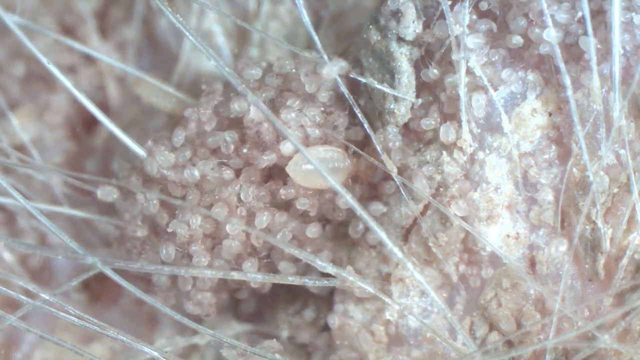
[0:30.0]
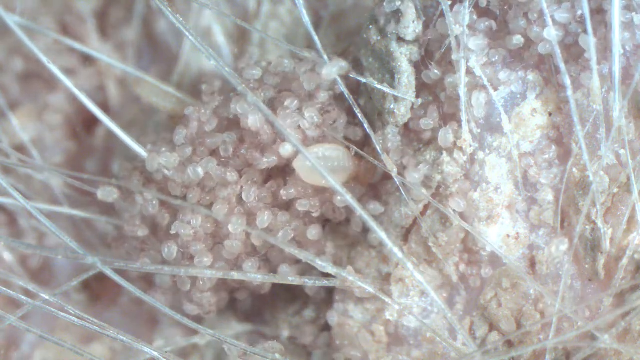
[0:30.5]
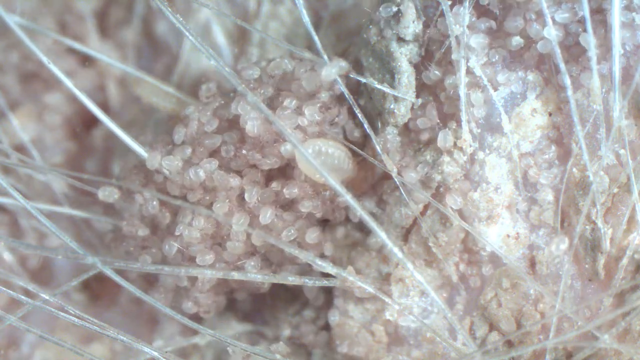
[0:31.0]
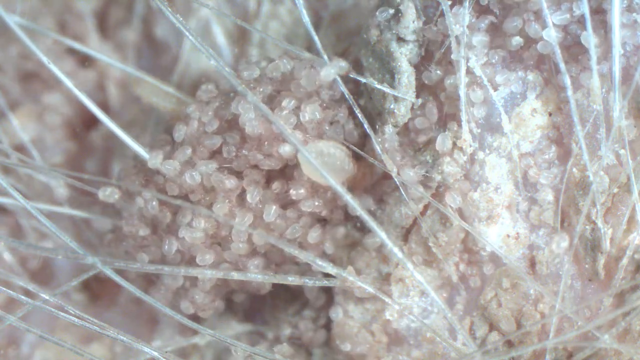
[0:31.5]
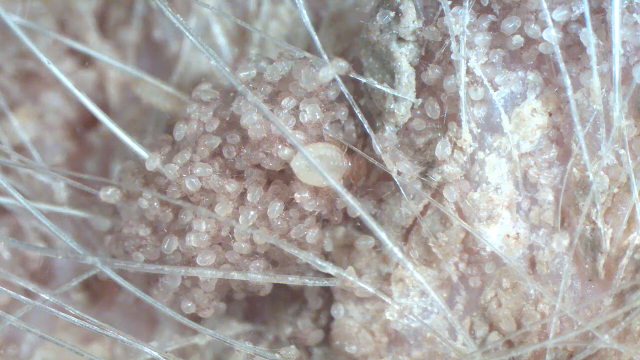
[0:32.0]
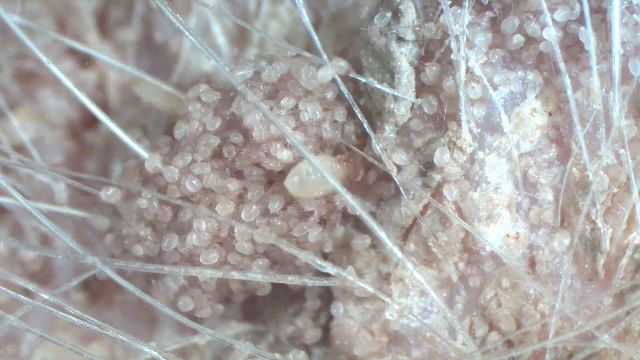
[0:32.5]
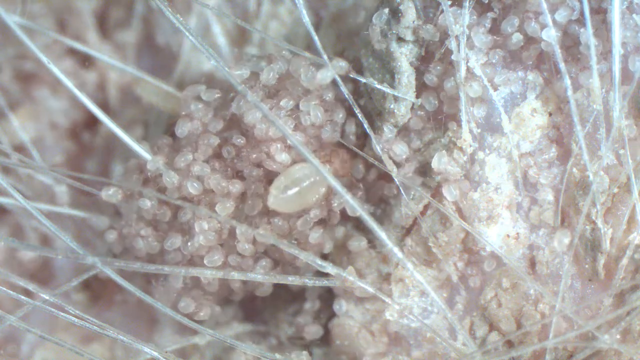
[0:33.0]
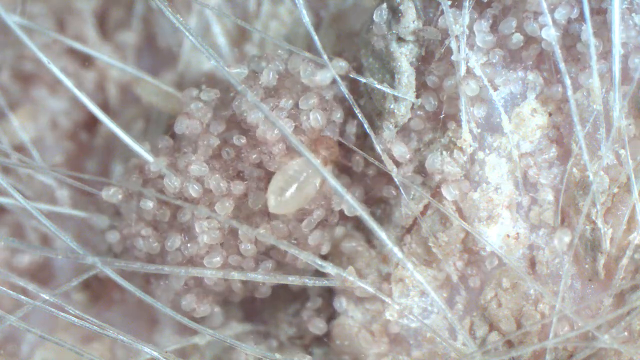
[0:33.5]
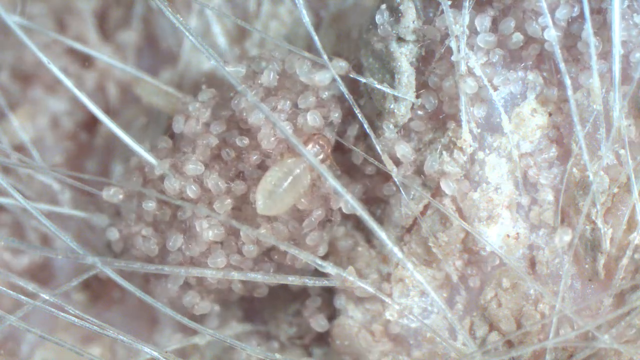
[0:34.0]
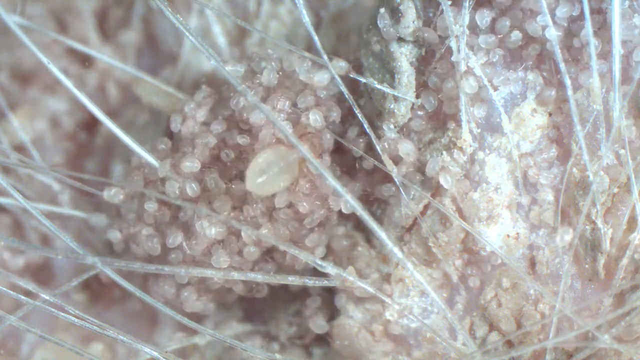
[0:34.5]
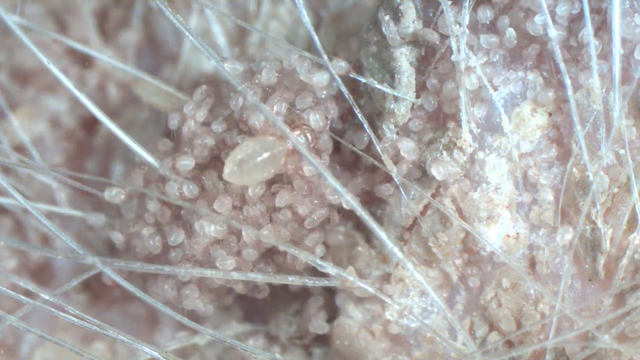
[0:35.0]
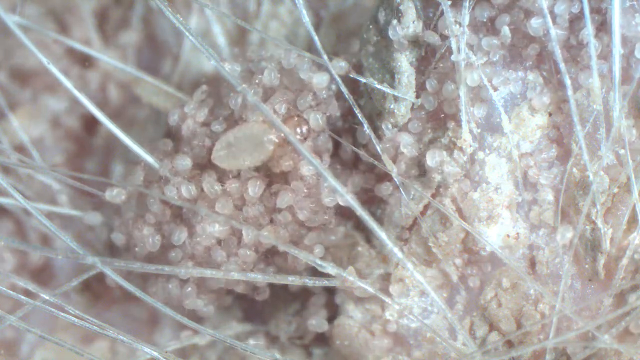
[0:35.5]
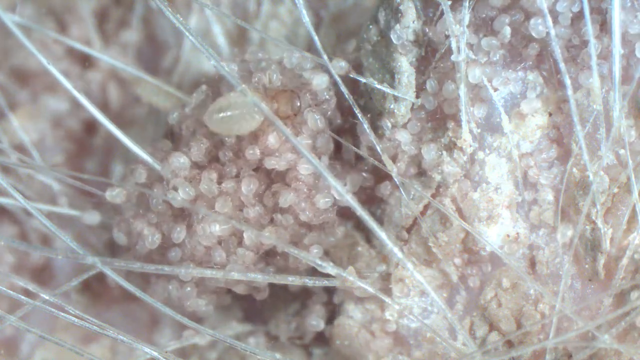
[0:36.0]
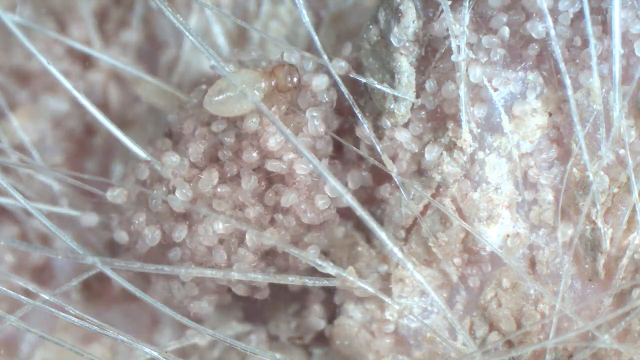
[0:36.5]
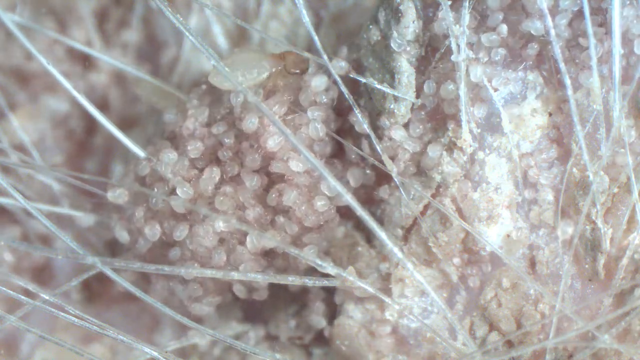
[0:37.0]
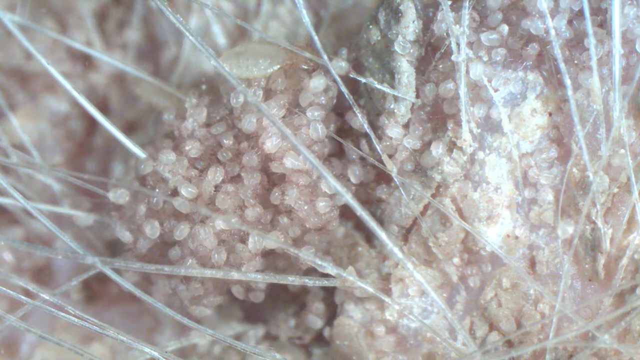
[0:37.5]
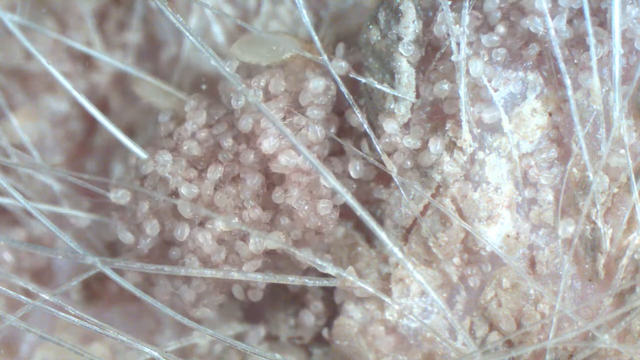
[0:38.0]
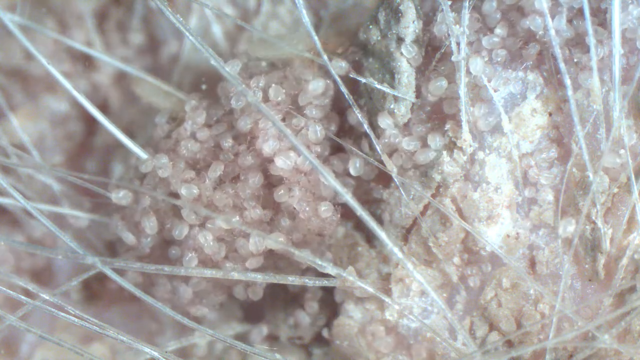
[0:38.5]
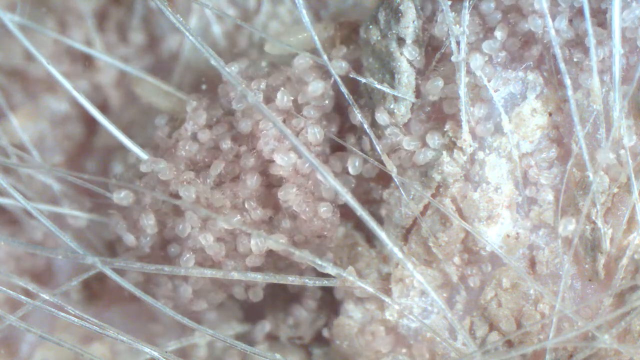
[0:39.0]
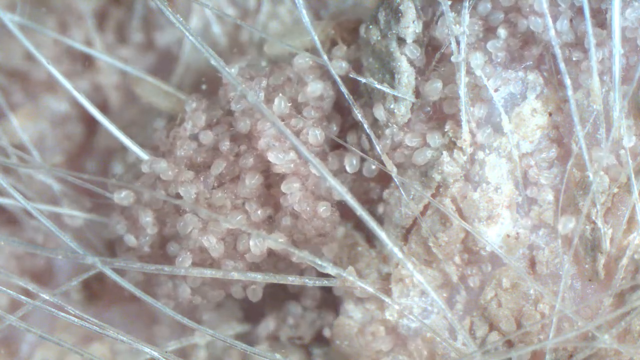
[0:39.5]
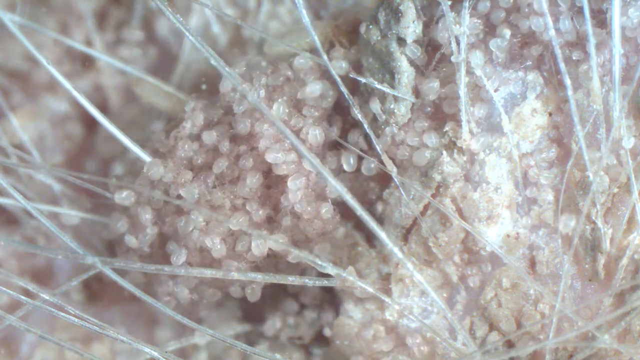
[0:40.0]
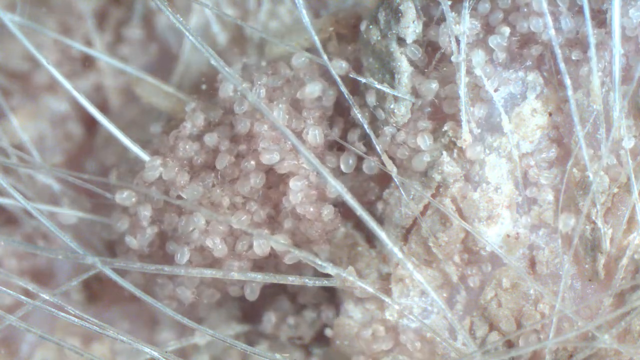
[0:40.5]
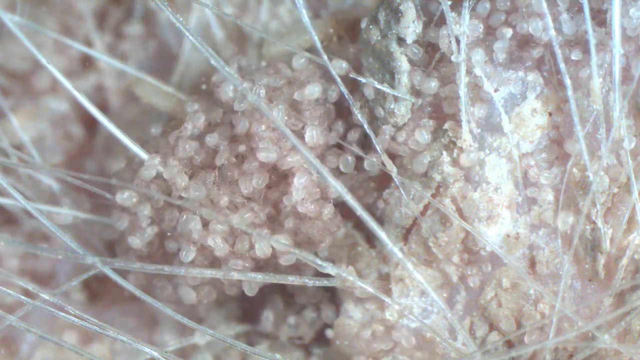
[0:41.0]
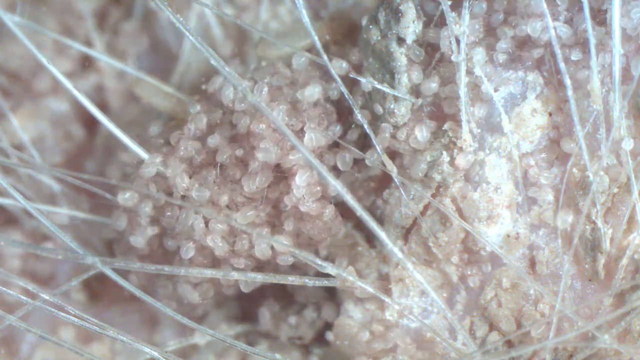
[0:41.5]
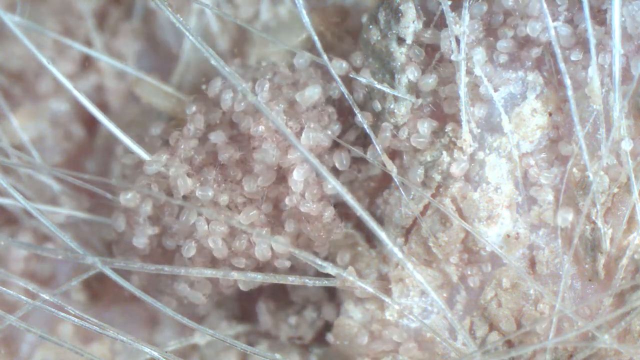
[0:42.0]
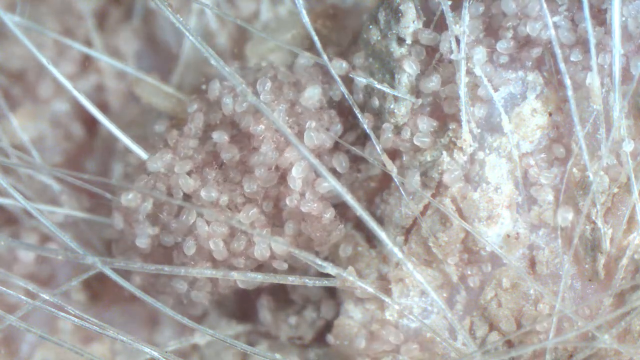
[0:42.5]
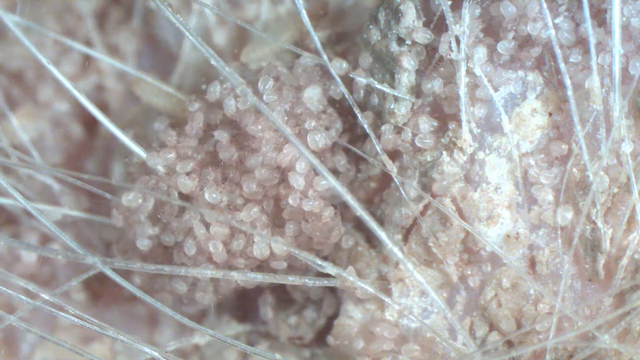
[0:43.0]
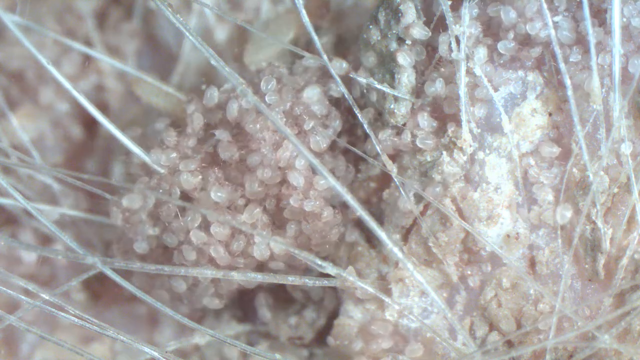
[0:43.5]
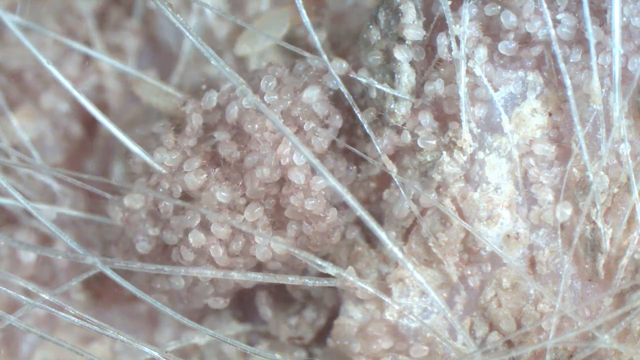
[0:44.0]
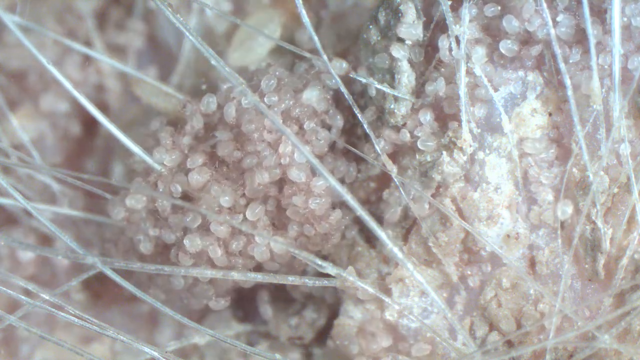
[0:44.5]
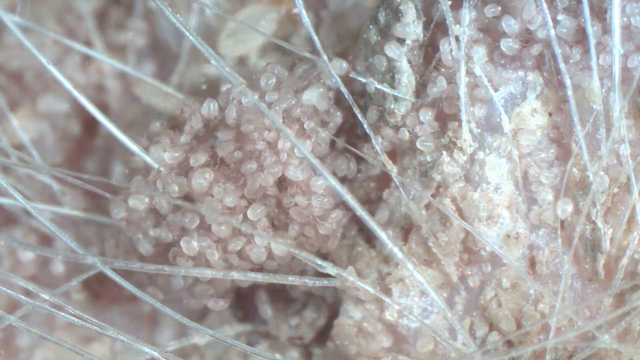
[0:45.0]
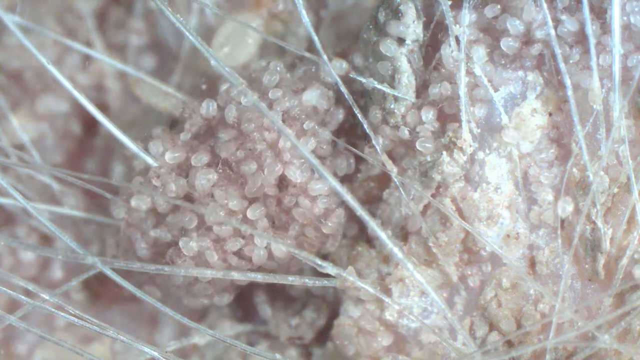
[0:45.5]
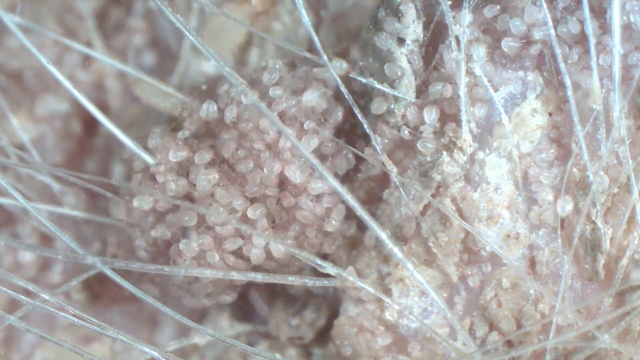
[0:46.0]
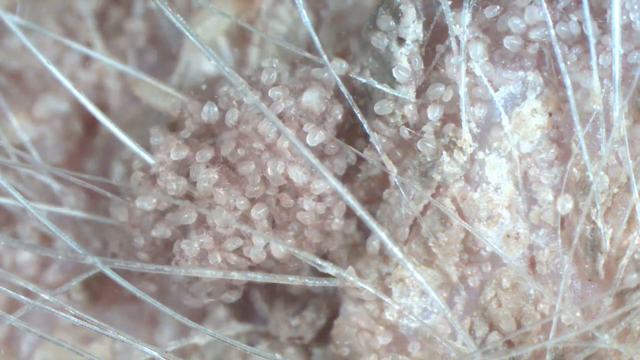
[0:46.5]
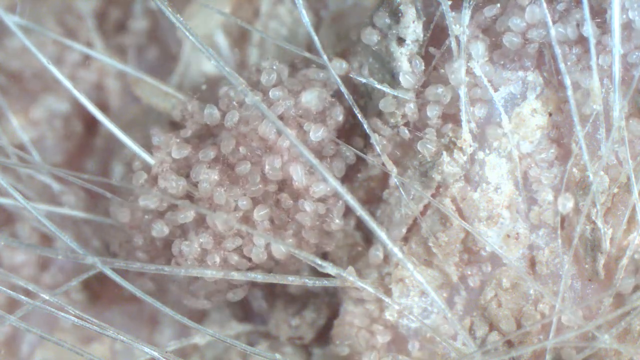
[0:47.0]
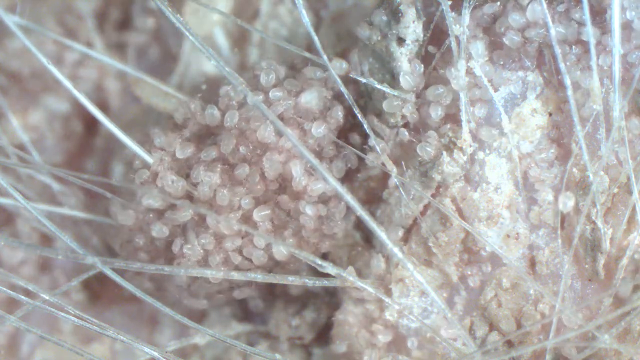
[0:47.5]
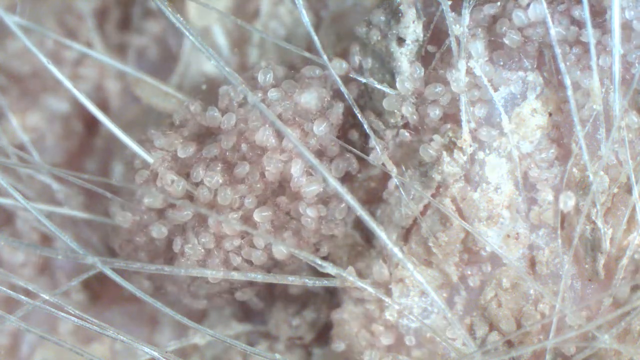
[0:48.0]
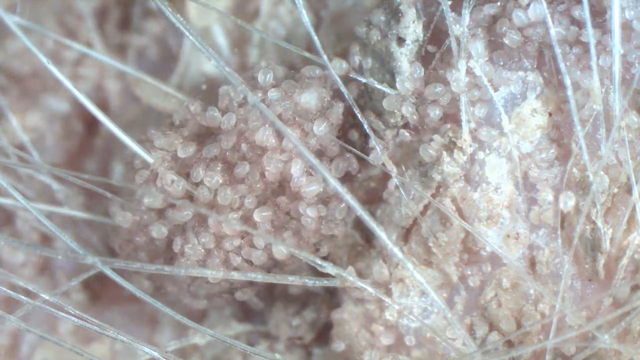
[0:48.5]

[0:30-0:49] The largest bug is still in the middle of the screen, and the translucent brown thing in its mouth is moving as well. The bug pulls its body out and moves backward and up toward the top middle of the screen. A side view of the bug follows, and it goes out of focus so little can be seen; the giant bug then moves away and is no longer visible. Throughout the video, while the bigger bug moves, many of the little bugs are moving around the screen toward the center, where the large bundle of small bugs is. The colour scheme stays the same: white, clear, translucent and gray with hints of pink.